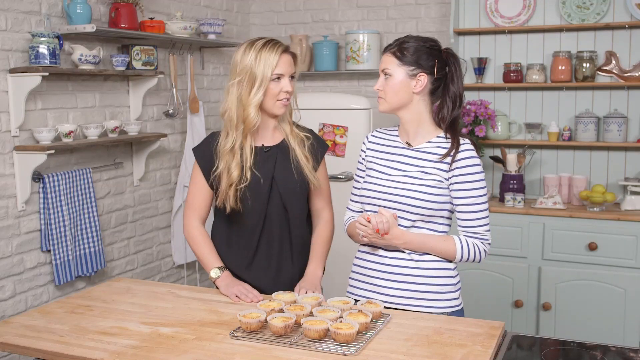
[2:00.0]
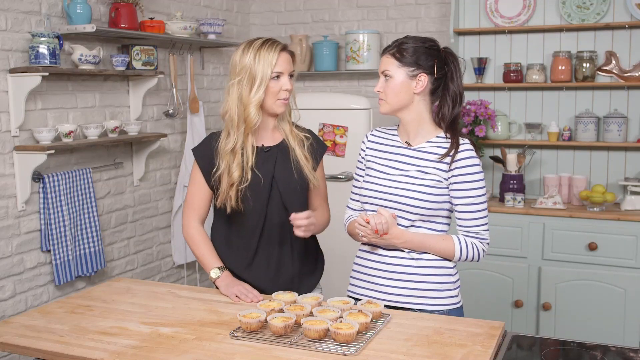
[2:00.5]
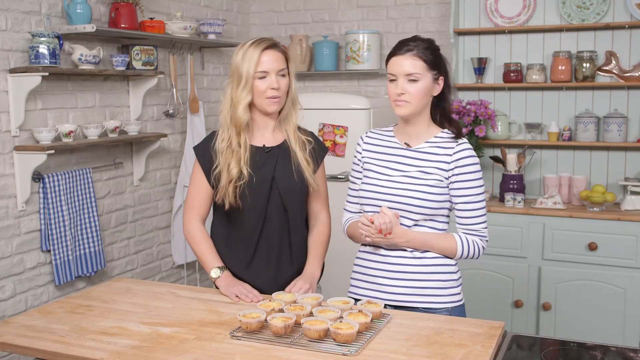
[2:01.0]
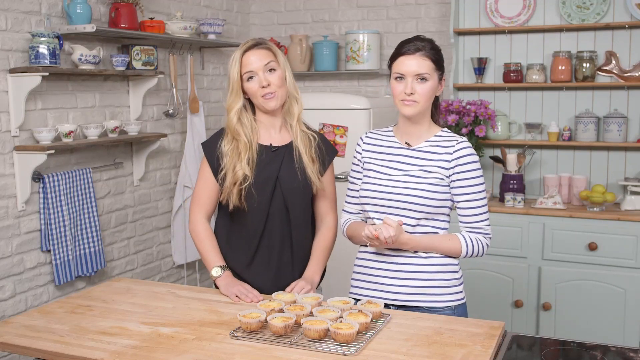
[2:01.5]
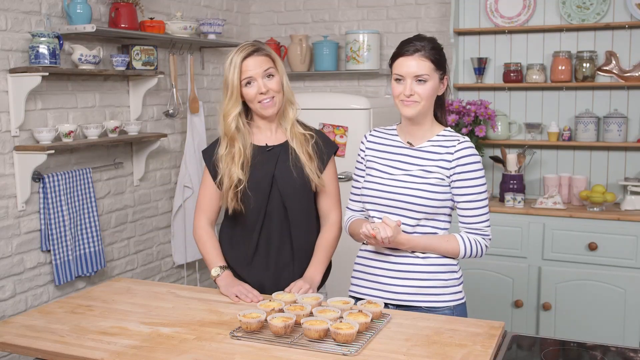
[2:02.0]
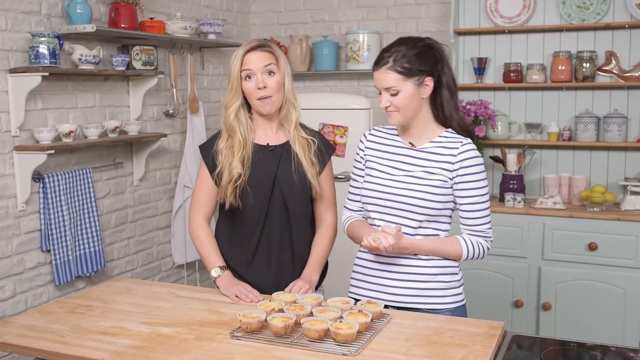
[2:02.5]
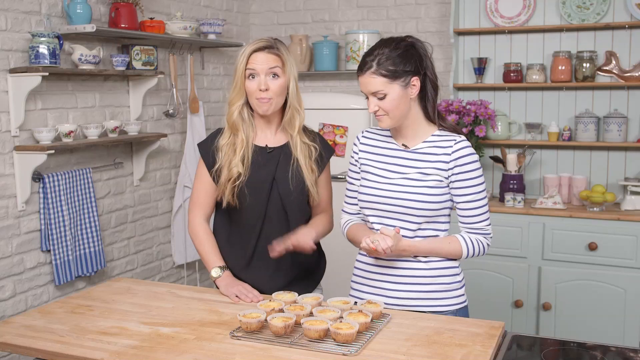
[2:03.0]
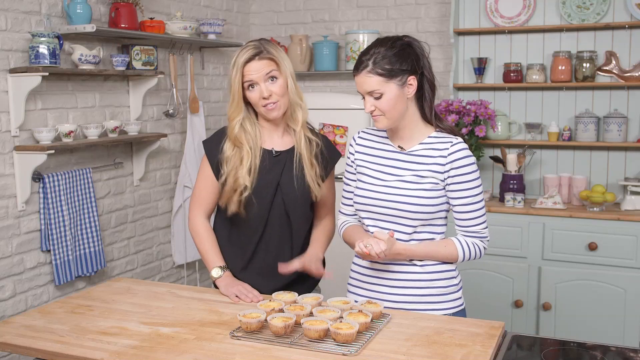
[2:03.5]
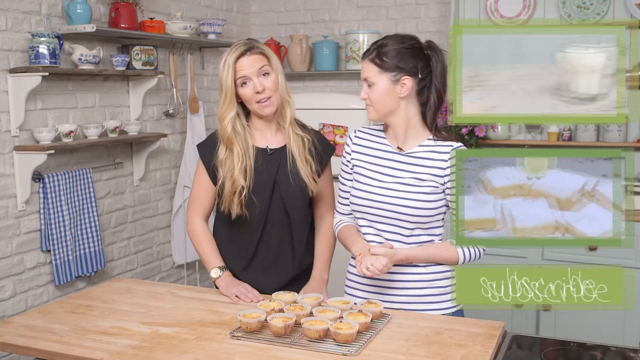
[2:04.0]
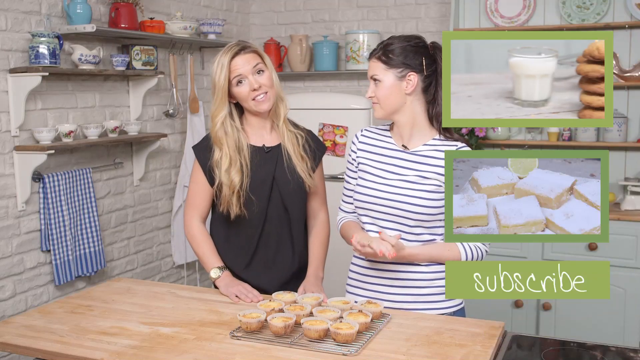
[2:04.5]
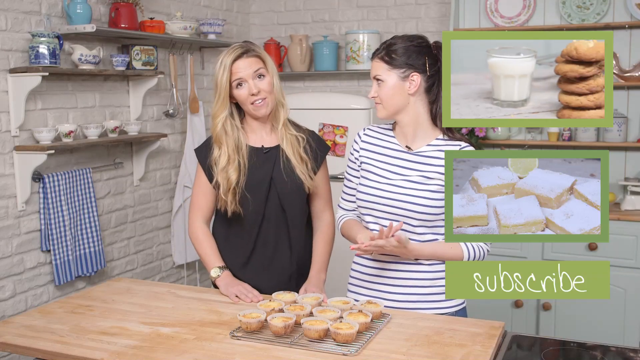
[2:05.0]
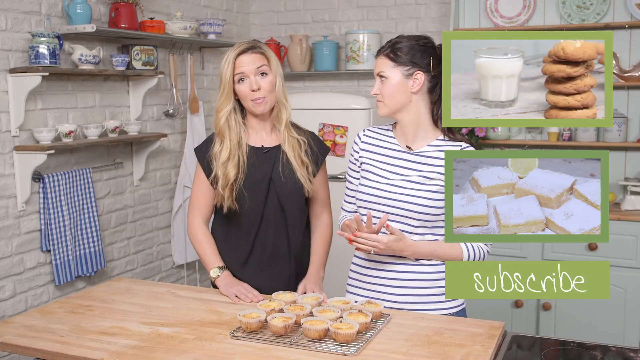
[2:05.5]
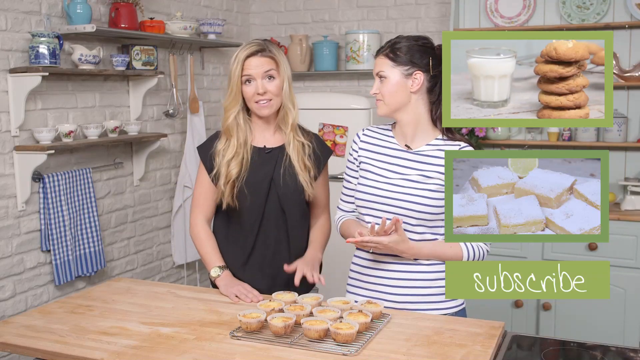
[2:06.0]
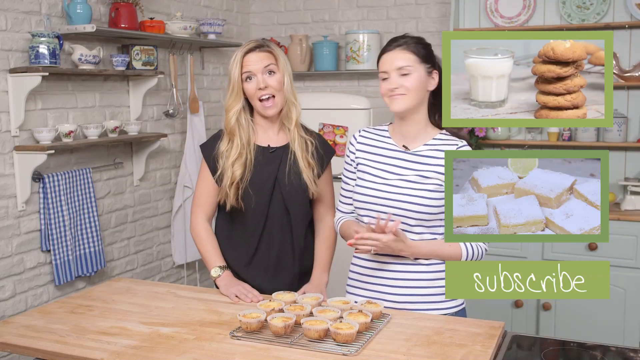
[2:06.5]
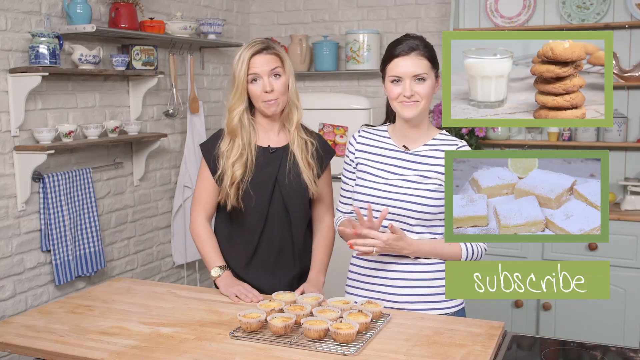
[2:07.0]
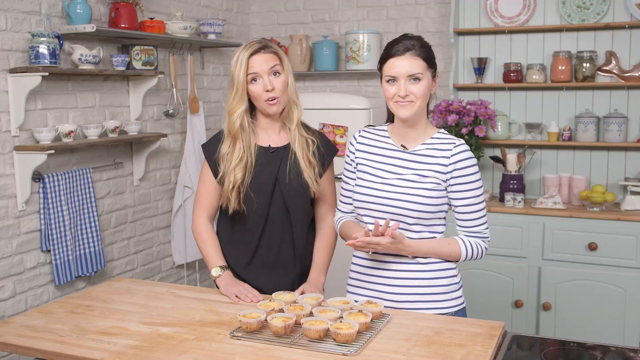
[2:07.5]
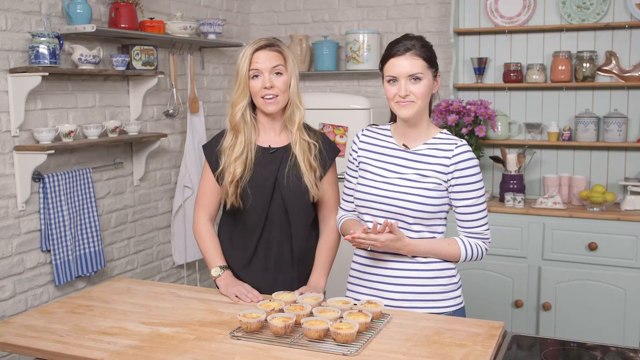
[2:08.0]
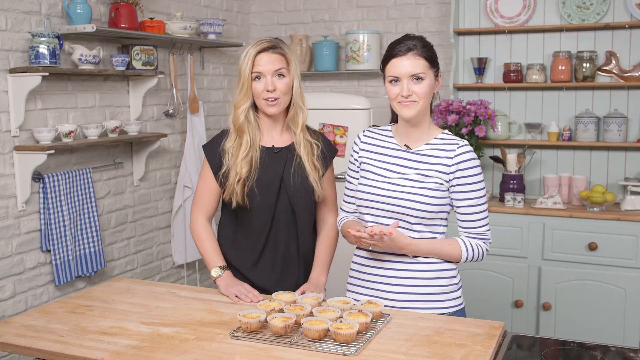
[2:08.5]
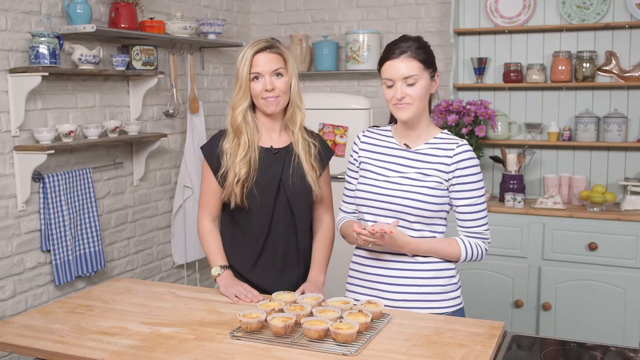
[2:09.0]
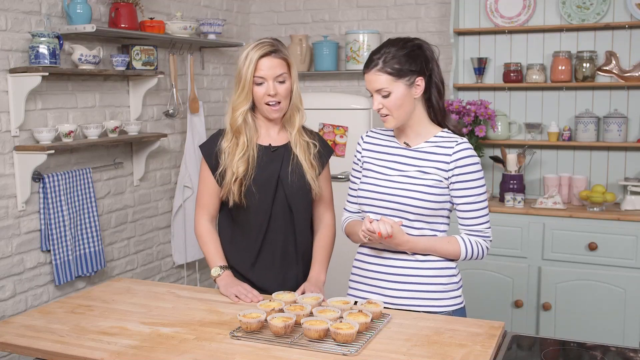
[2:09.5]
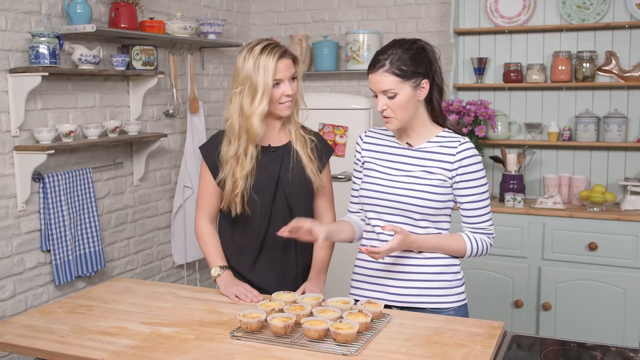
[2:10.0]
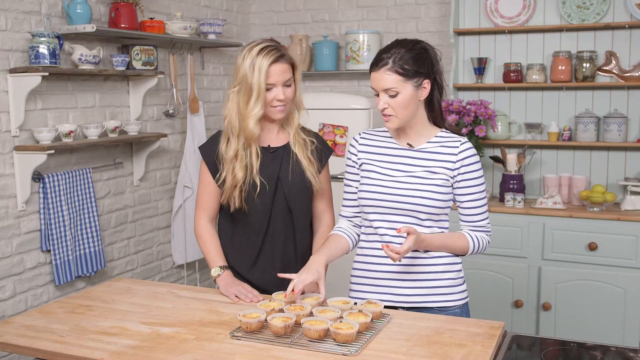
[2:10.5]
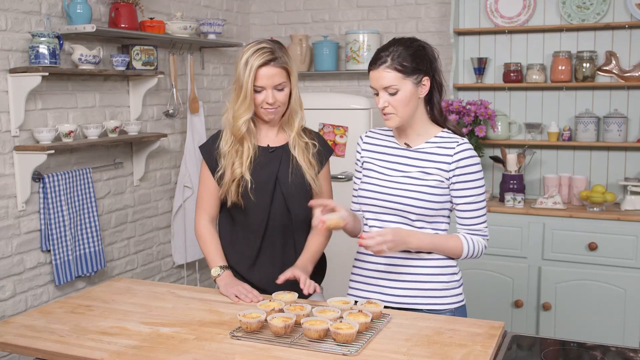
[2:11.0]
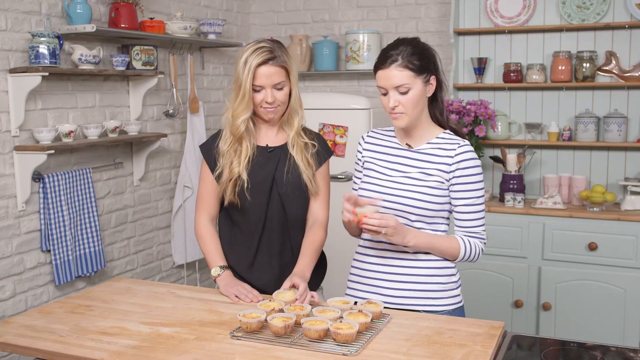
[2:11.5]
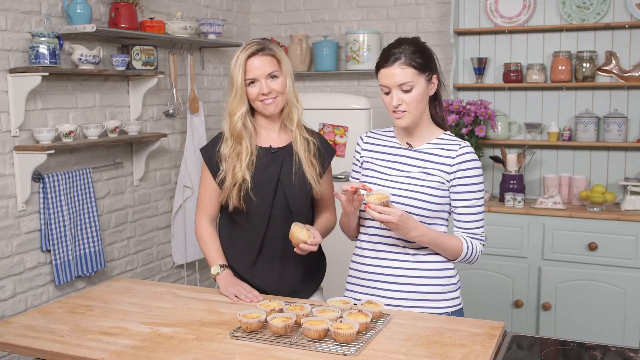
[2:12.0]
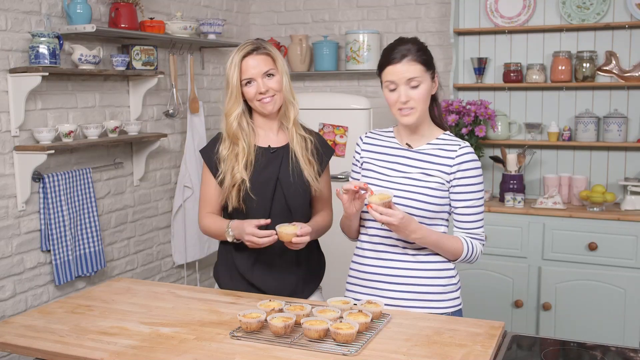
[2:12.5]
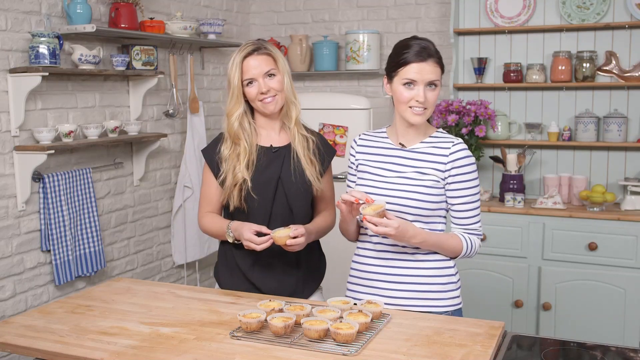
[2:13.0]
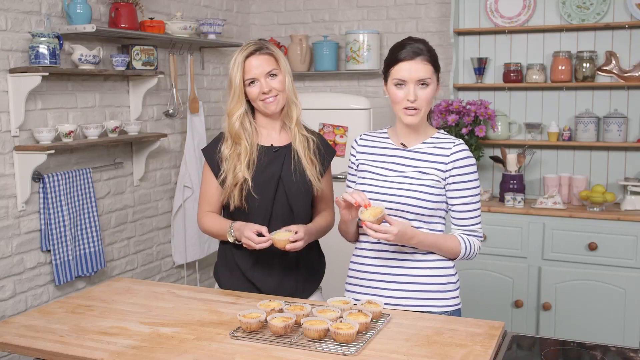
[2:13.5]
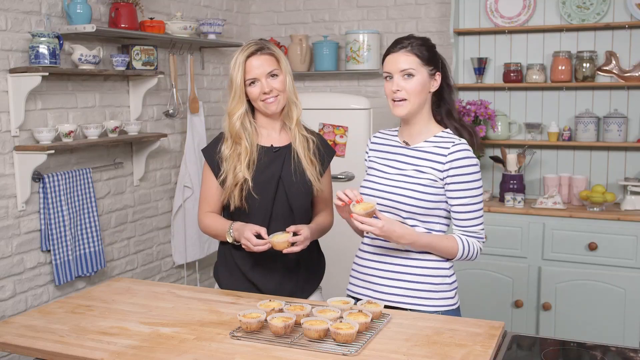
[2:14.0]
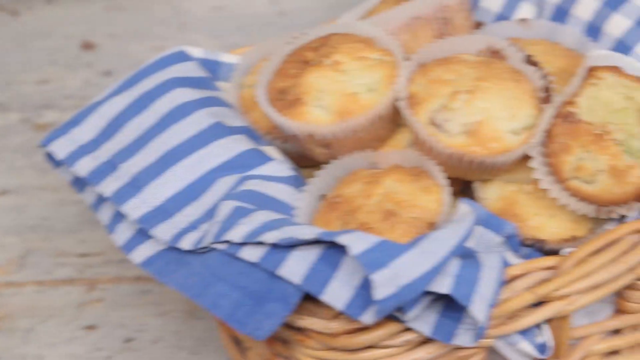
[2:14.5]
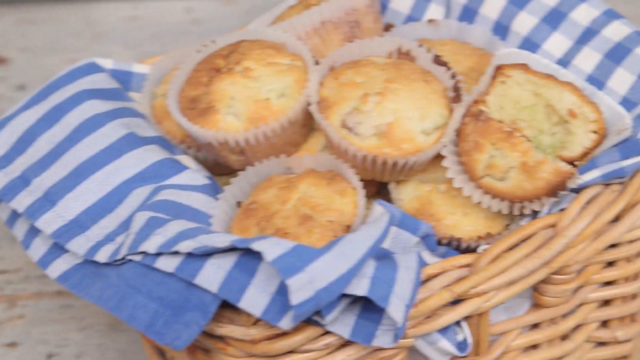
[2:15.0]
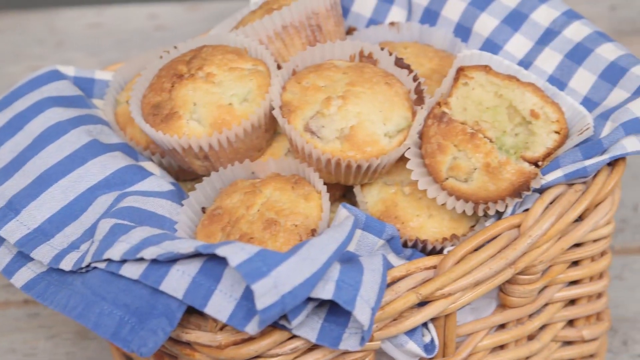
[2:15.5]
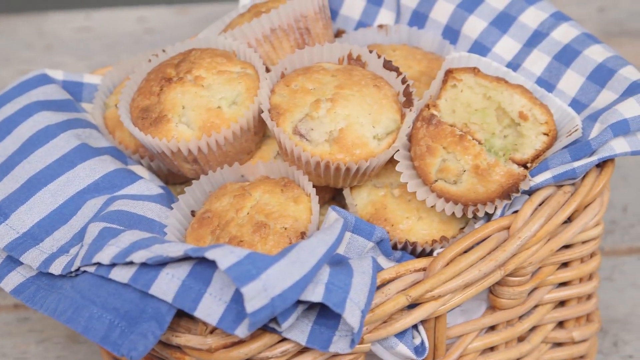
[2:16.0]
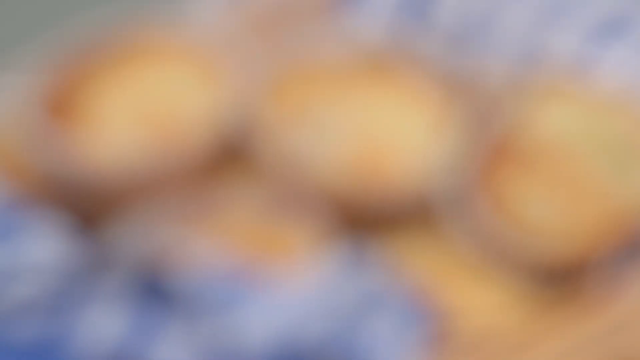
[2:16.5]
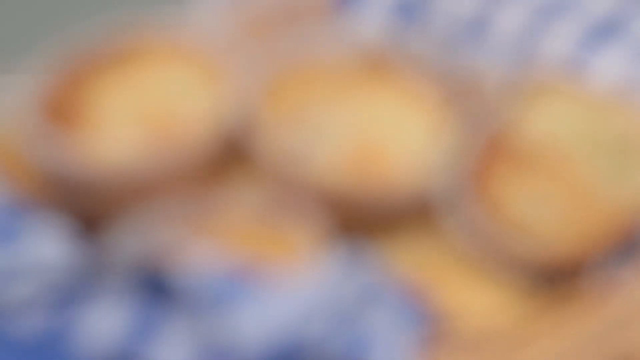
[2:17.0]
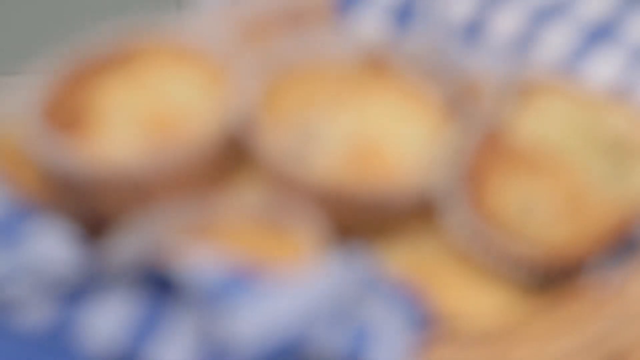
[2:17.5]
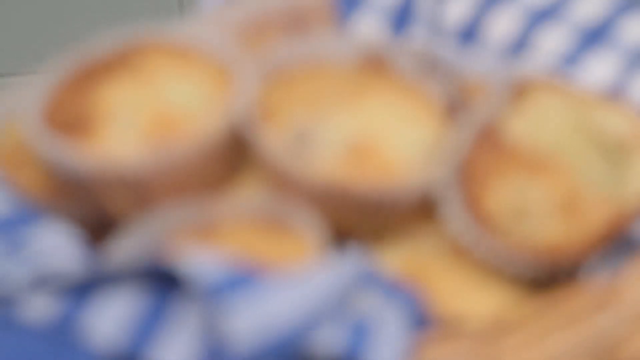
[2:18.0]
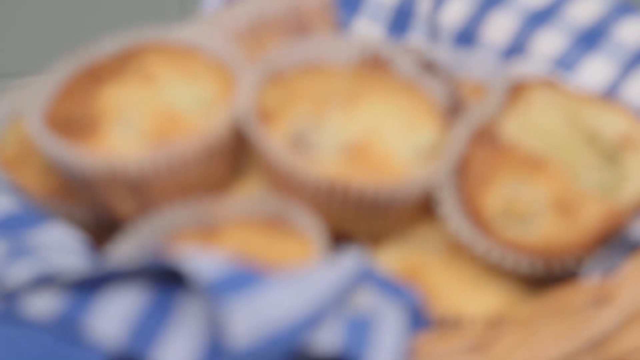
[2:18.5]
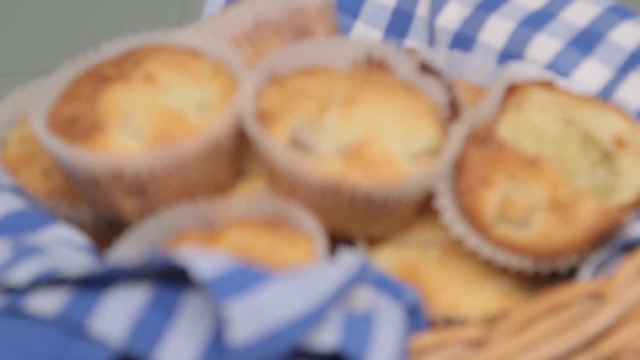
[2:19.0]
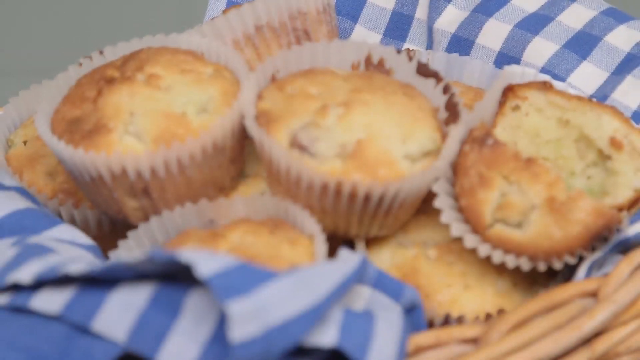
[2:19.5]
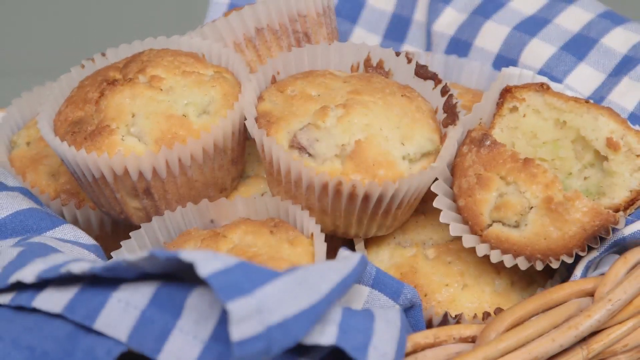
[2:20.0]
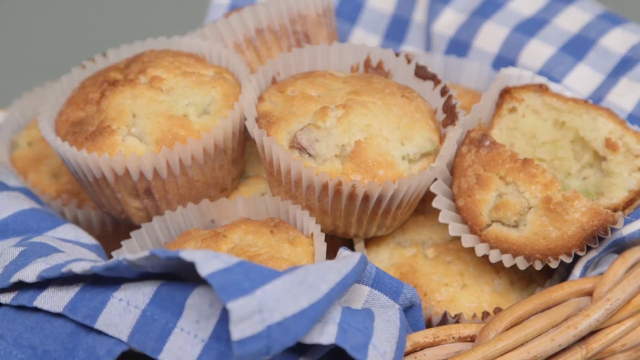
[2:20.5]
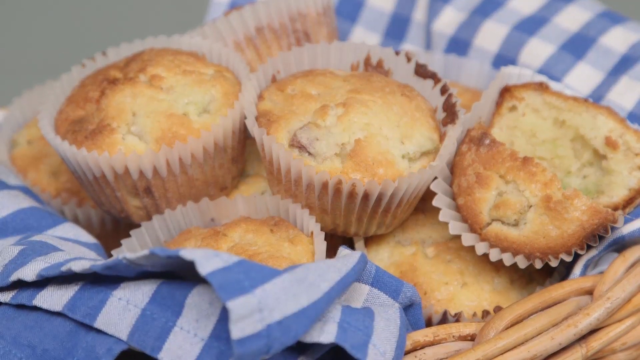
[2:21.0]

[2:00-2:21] She seems to be speaking to the audience behind the camera, showing the finished cookies in the kitchen. On the left is a picture of milk and cookies, and at the bottom is some sort of cake; "subscribe" appears at the bottom of those two pictures. The baking is finished, and they seem to pick one up and try it.